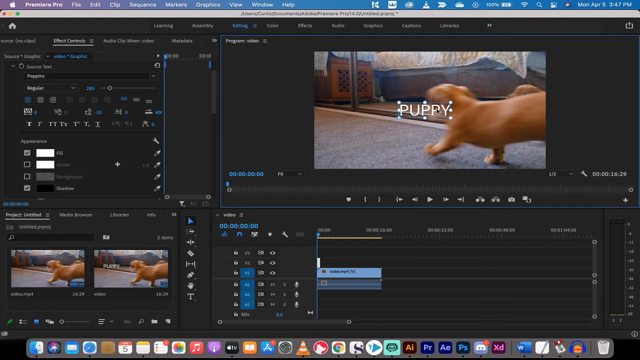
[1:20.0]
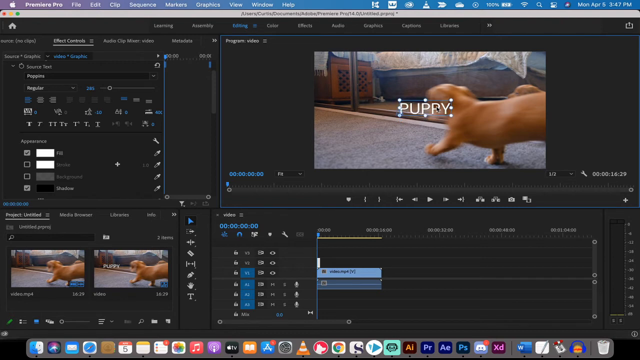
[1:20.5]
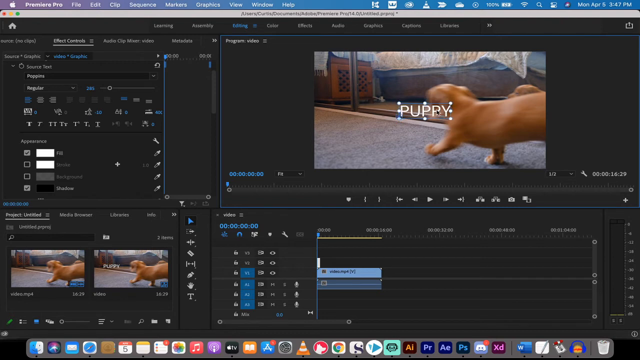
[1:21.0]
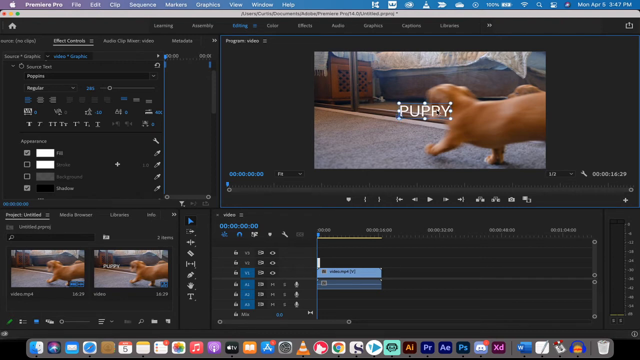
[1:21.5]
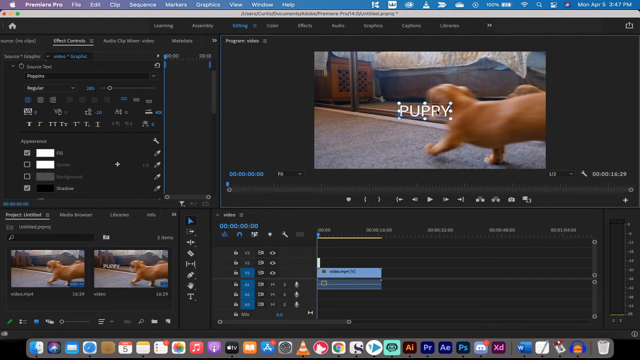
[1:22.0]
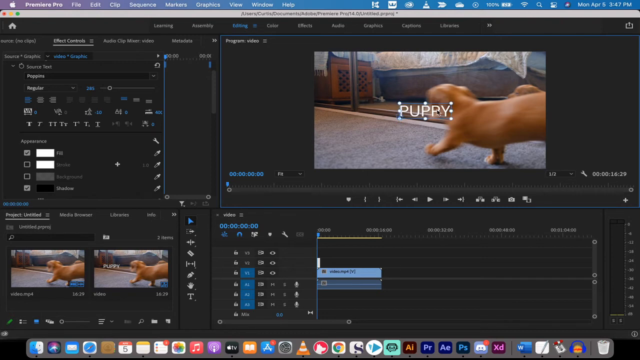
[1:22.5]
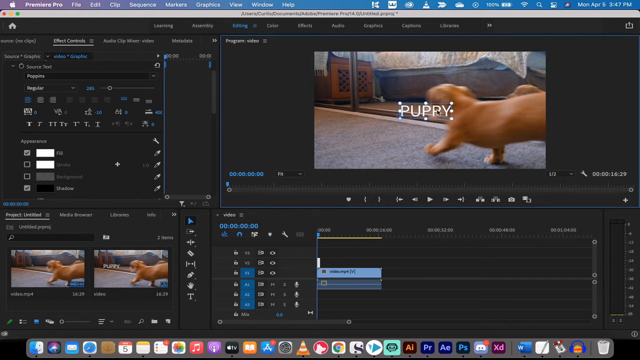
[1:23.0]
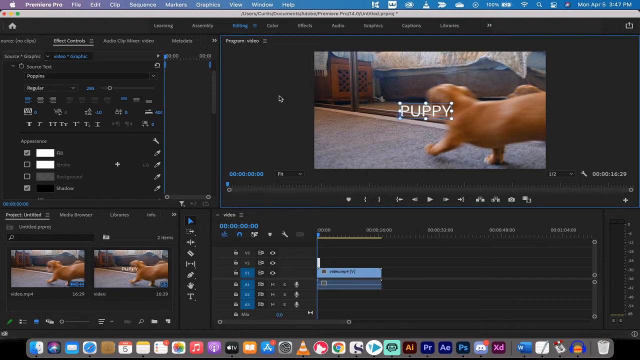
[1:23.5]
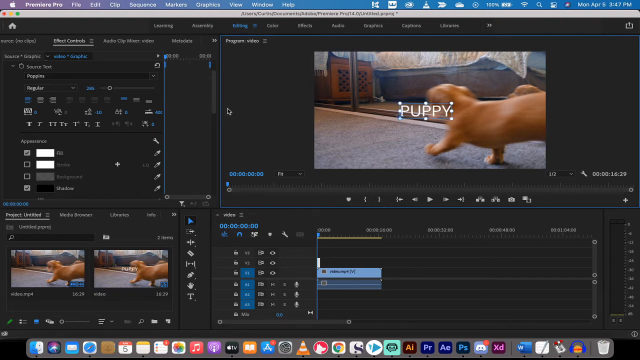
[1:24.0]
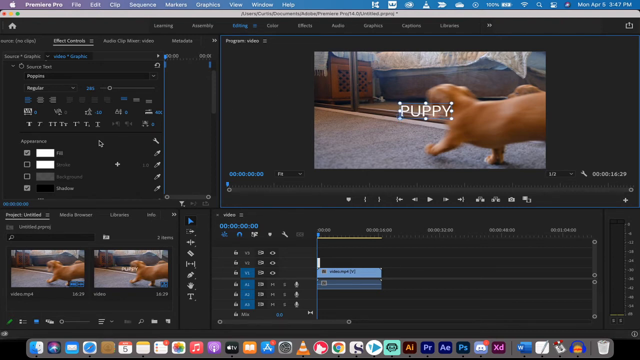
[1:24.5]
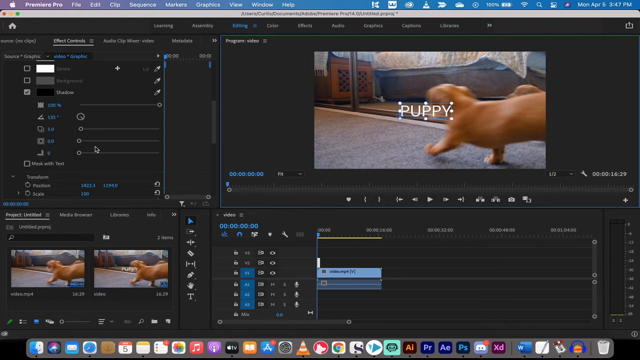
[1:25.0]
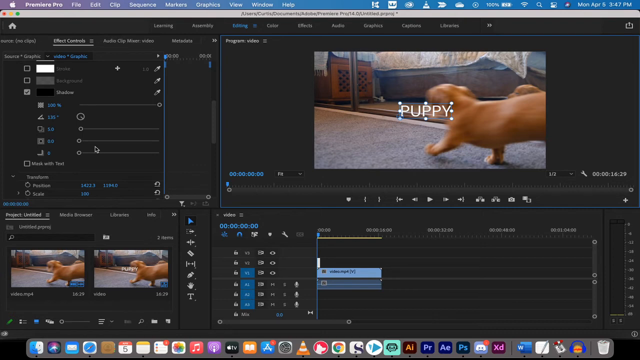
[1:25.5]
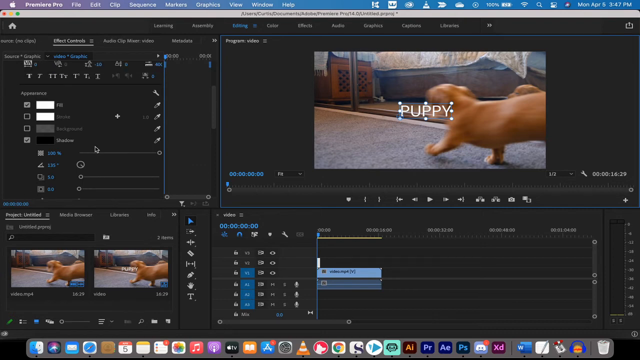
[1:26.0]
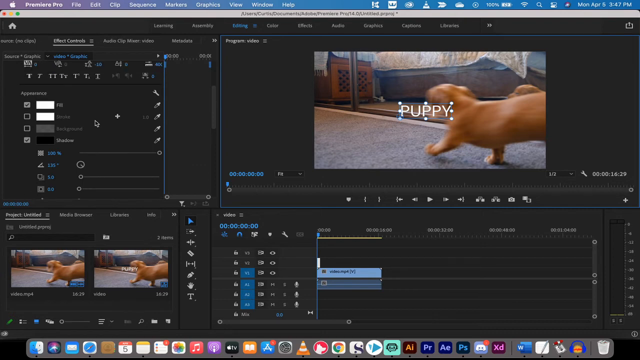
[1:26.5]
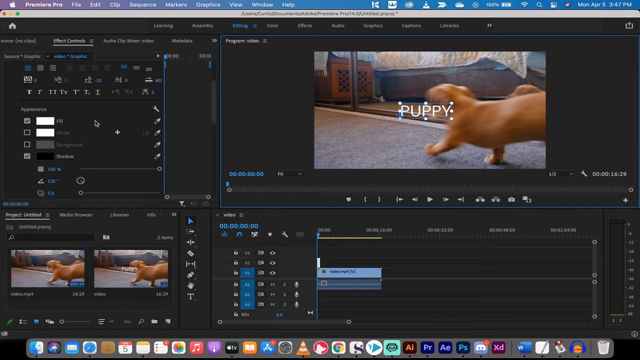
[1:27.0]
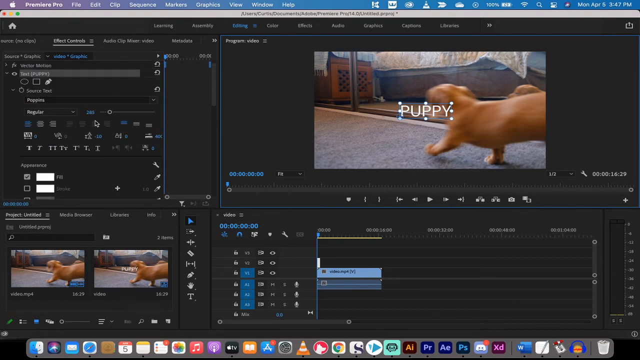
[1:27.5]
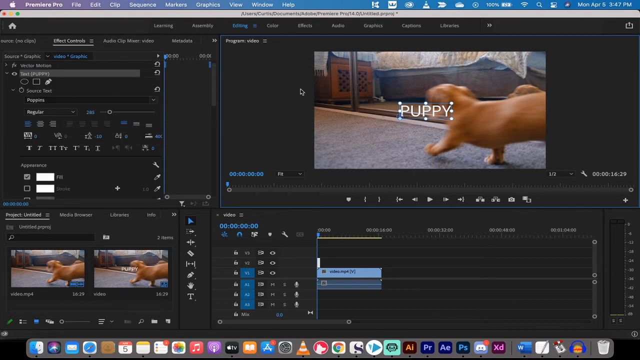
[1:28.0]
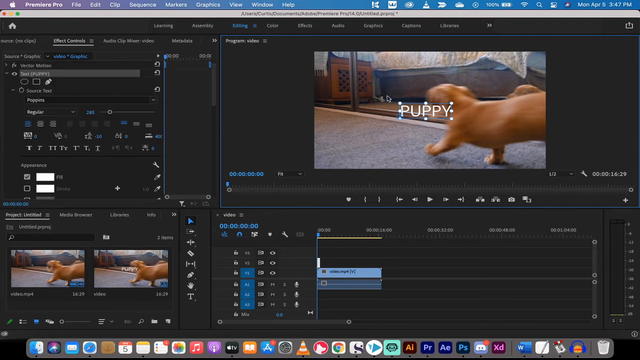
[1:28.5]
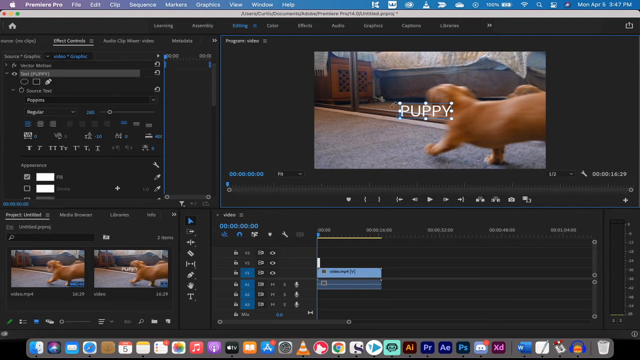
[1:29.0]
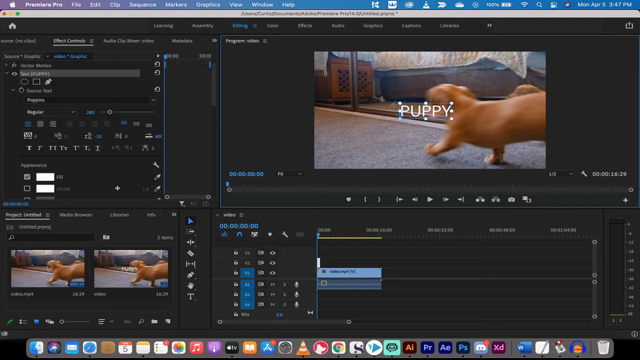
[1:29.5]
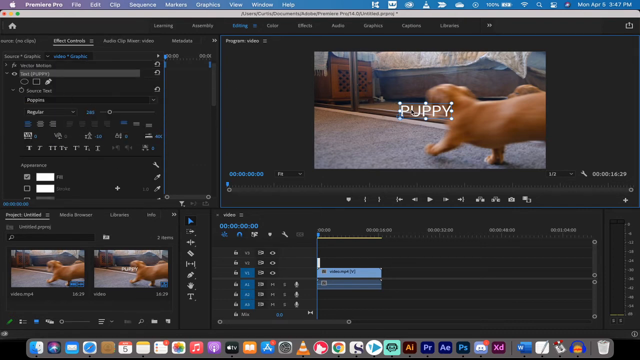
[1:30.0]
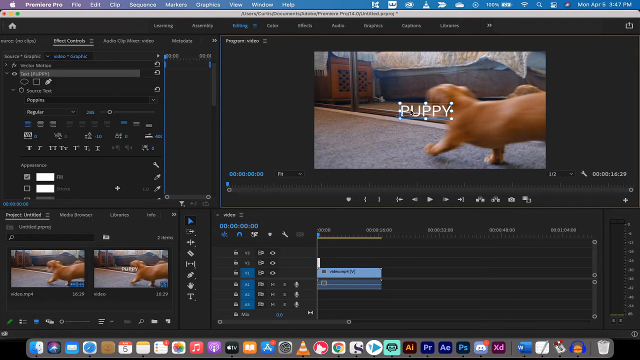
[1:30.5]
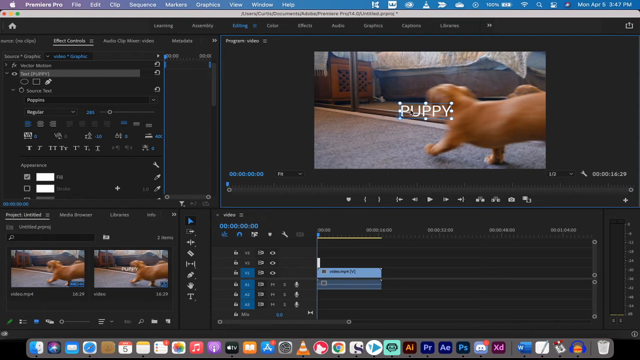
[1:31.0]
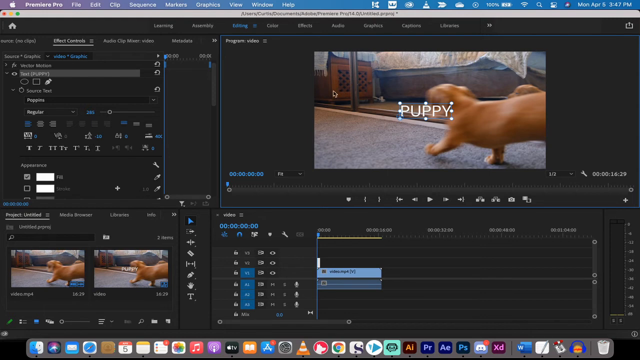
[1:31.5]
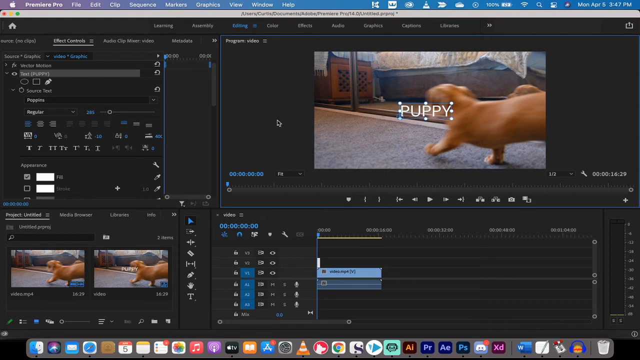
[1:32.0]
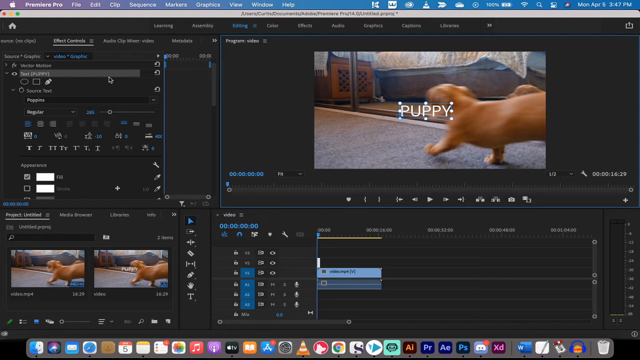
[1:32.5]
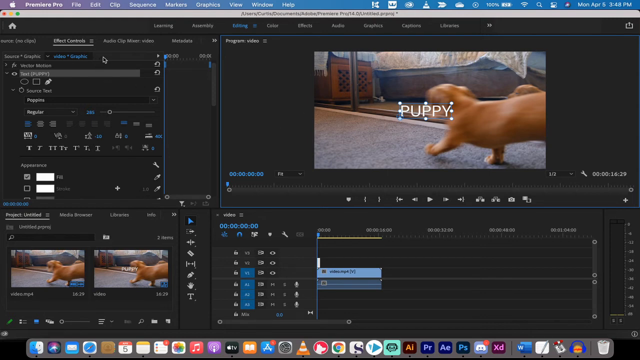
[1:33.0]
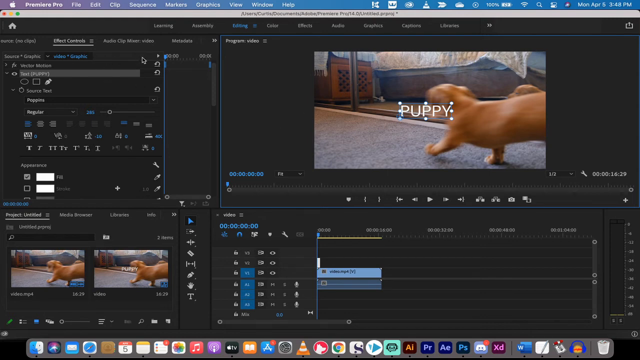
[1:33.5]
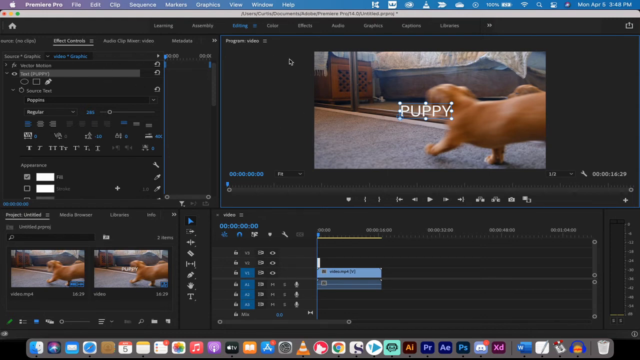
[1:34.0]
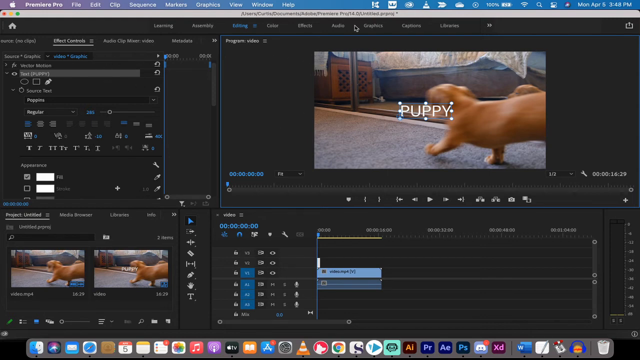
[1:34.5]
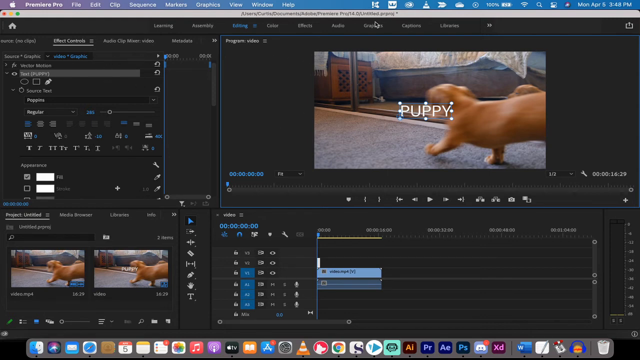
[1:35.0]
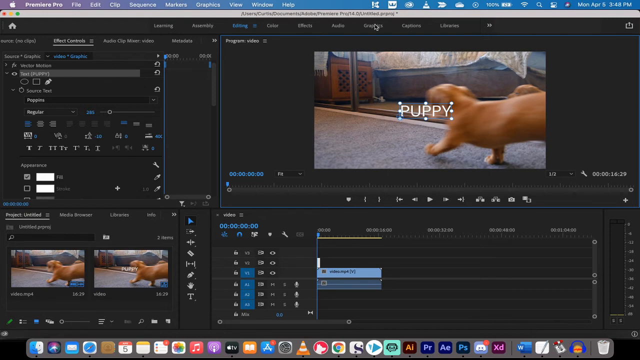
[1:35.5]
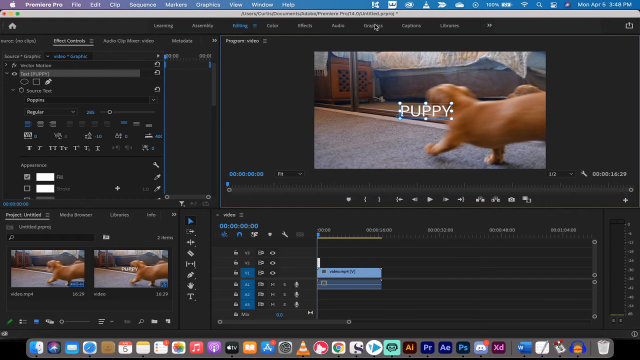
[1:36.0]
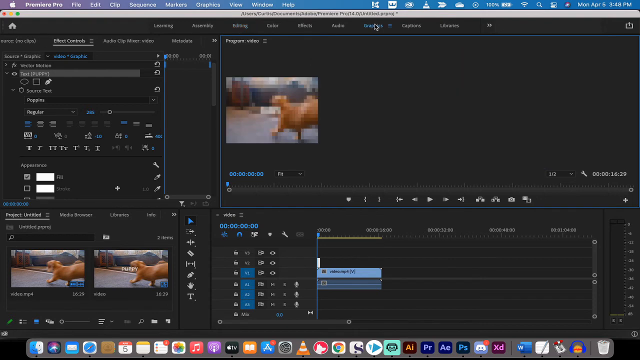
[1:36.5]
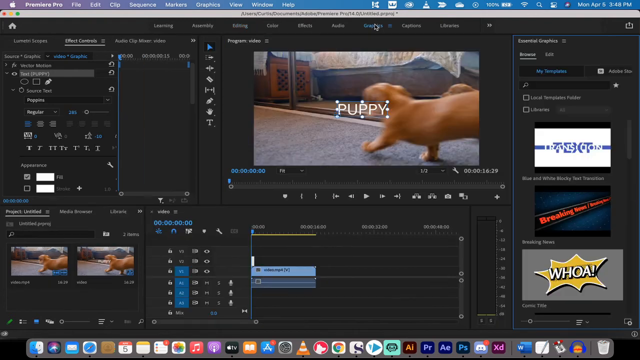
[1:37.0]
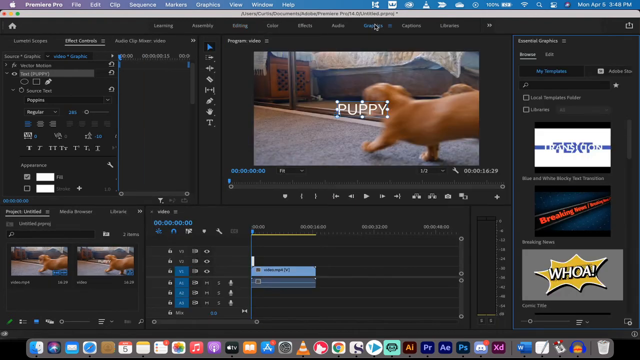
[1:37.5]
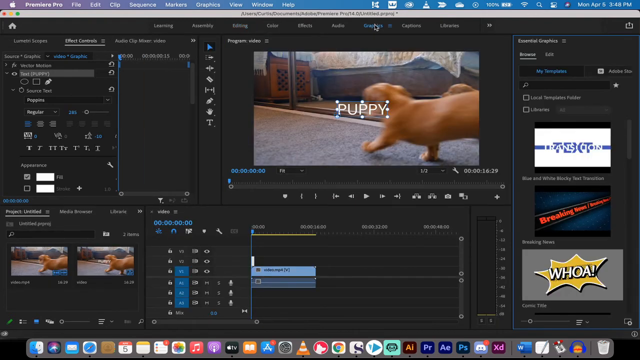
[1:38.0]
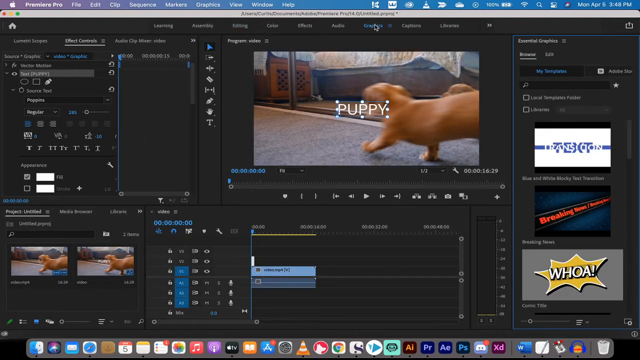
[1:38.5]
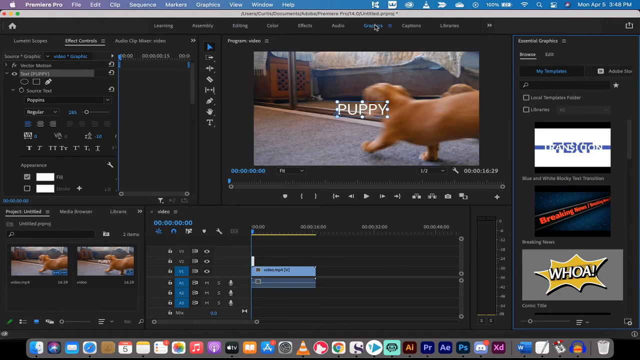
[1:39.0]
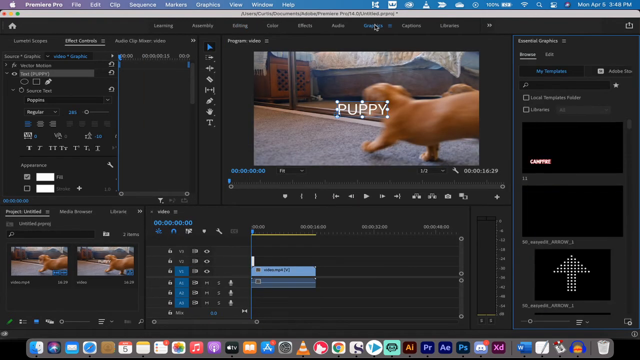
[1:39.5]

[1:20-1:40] Premiere Pro is open, and the preview section on the top right, titled "program video", still shows the puppies on the carpet area in the home. The text with the word "puppy" has been dragged and is outlined by eight white dots around a rectangle, three on the top, three on the bottom and one in the middle of each side, indicating it can be moved or resized at those points. The user drags the text up and then back down slightly, apparently trying to center it, then moves the cursor over to the effects control section on the left, where they scroll down and then up. The cursor moves back over to the text on the image and then back to the effects control section.